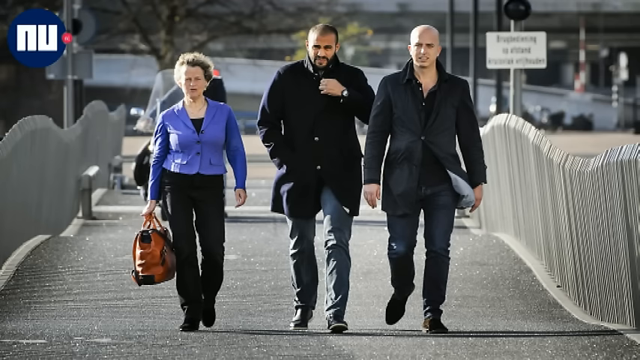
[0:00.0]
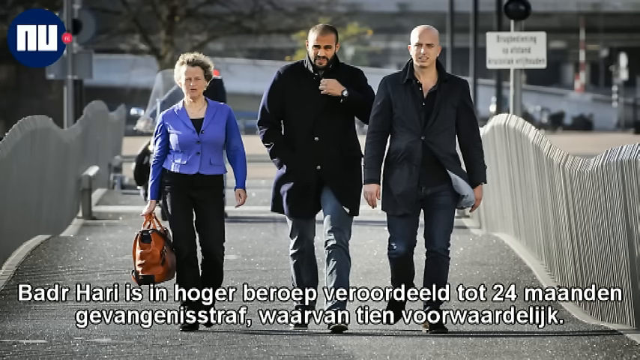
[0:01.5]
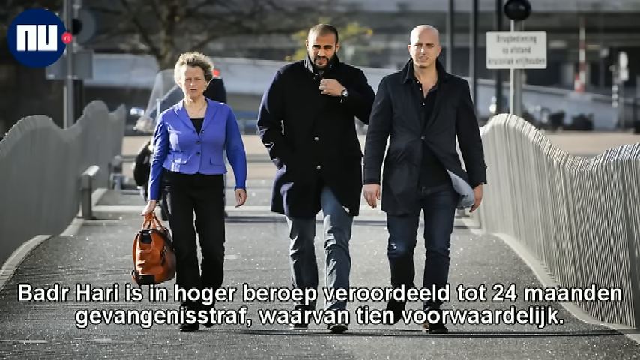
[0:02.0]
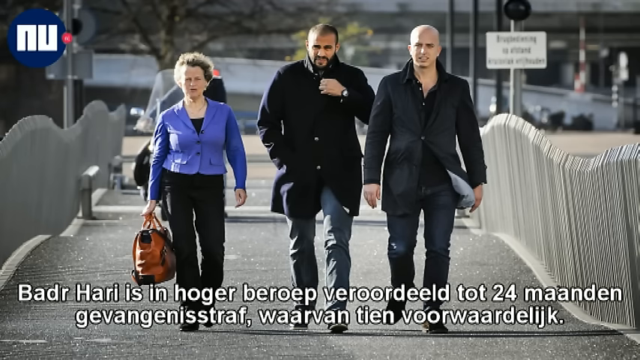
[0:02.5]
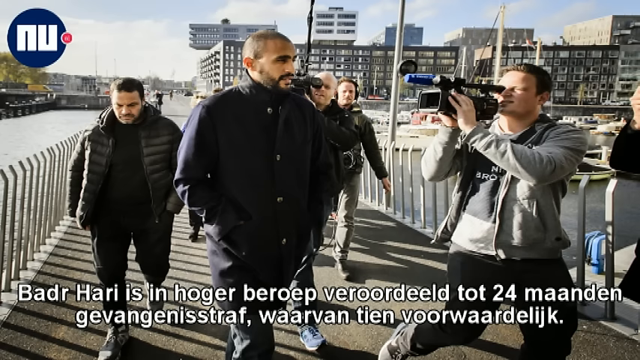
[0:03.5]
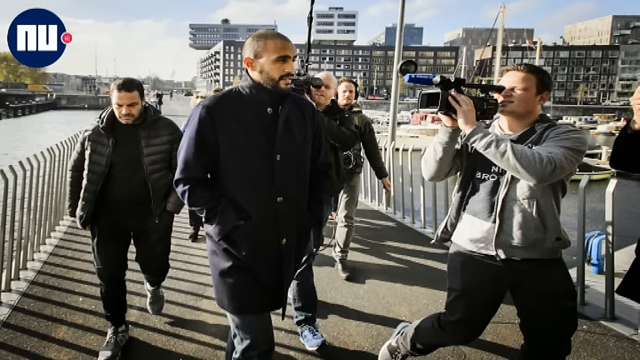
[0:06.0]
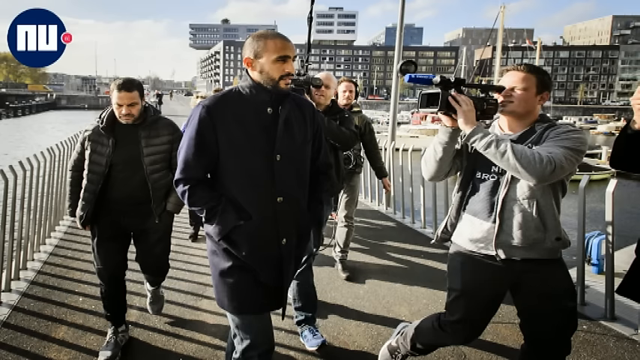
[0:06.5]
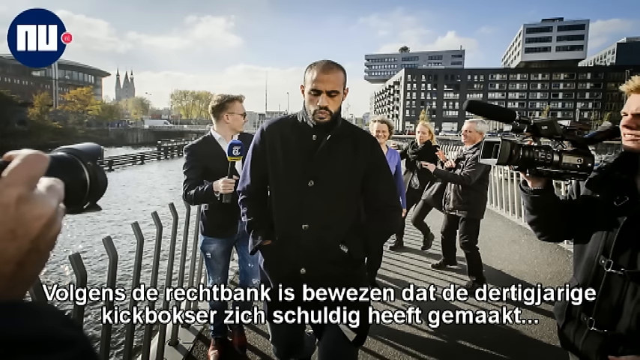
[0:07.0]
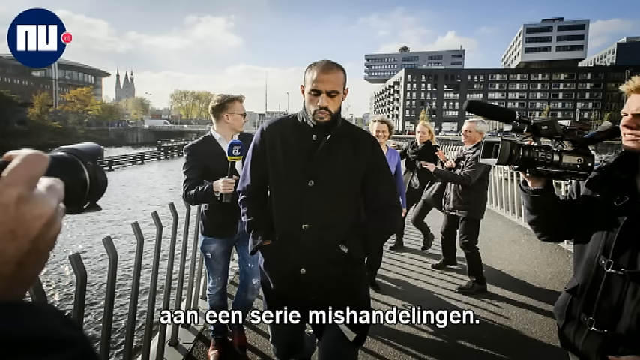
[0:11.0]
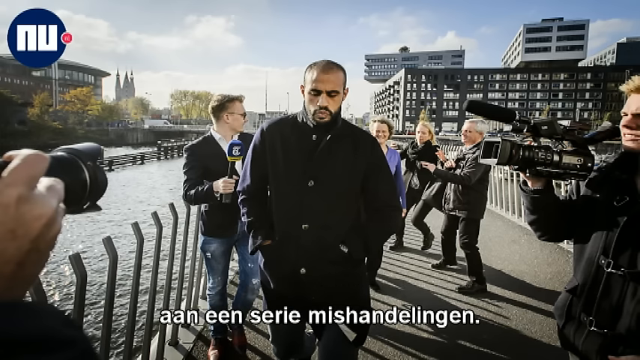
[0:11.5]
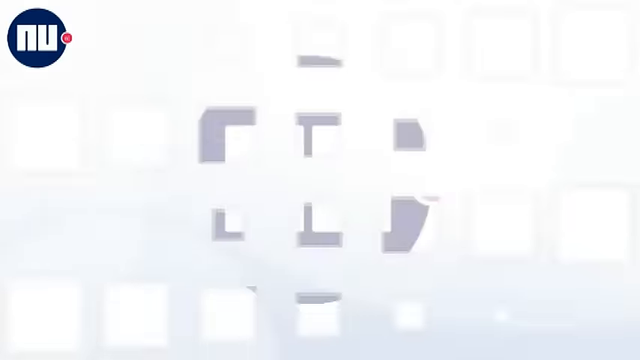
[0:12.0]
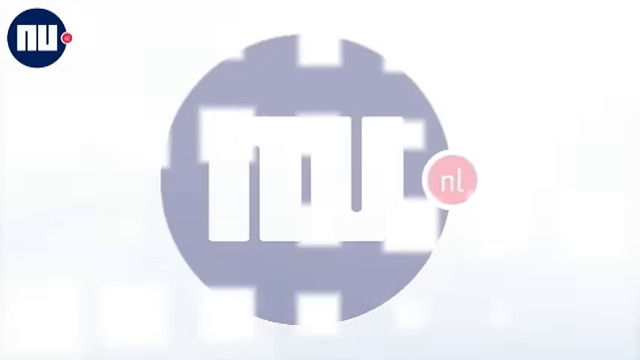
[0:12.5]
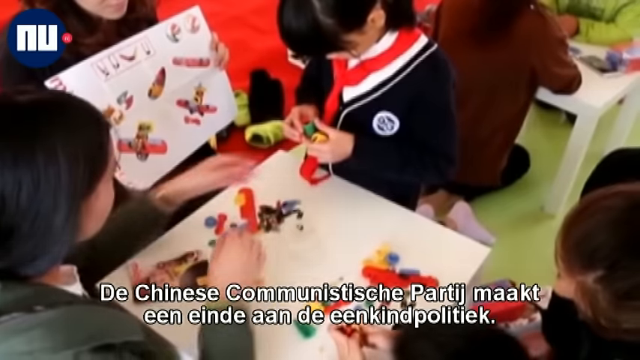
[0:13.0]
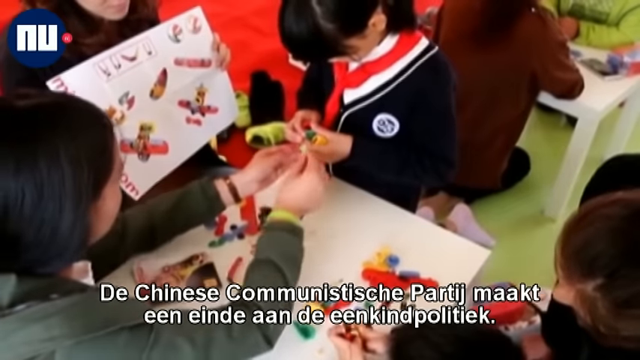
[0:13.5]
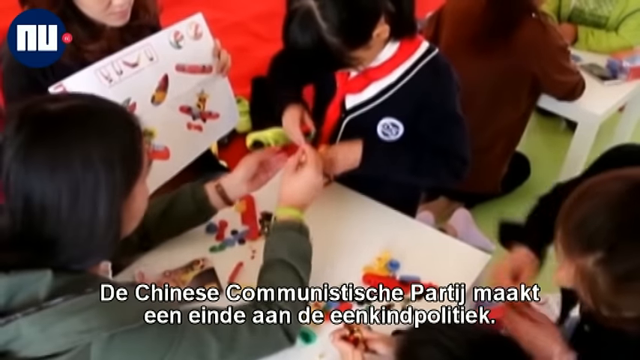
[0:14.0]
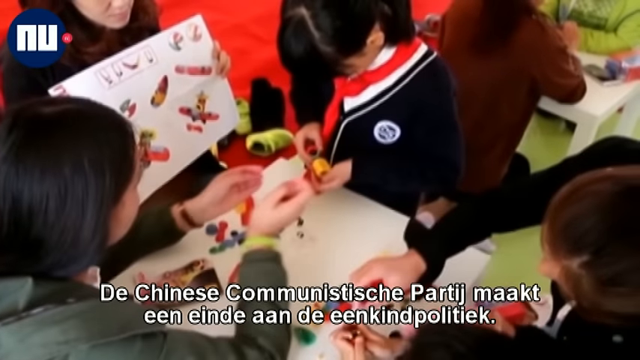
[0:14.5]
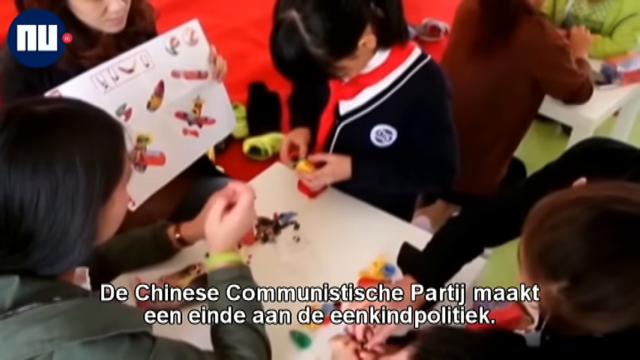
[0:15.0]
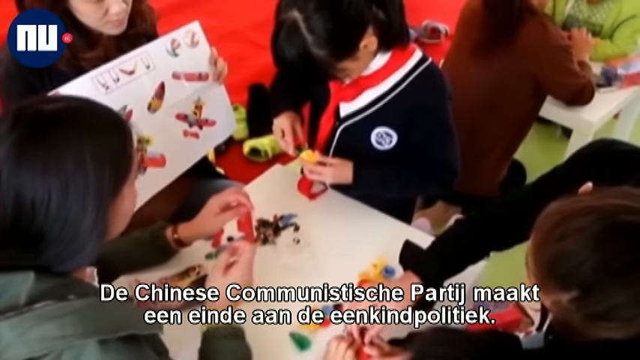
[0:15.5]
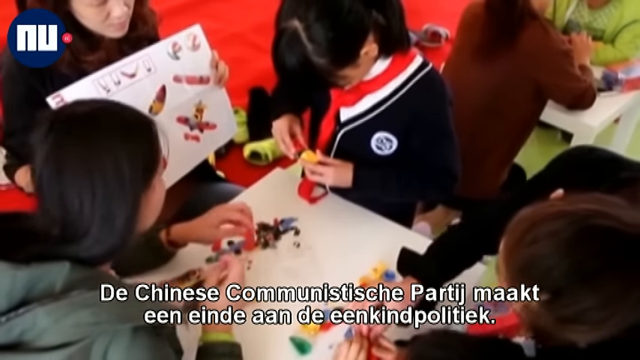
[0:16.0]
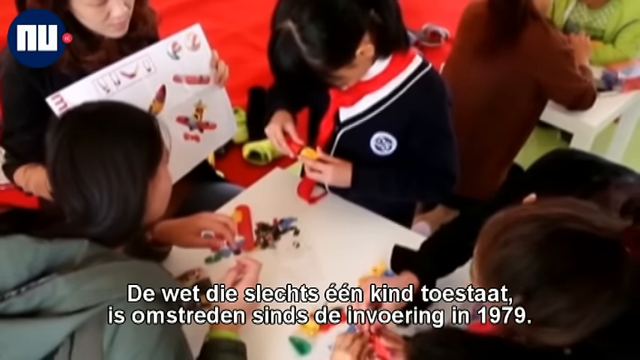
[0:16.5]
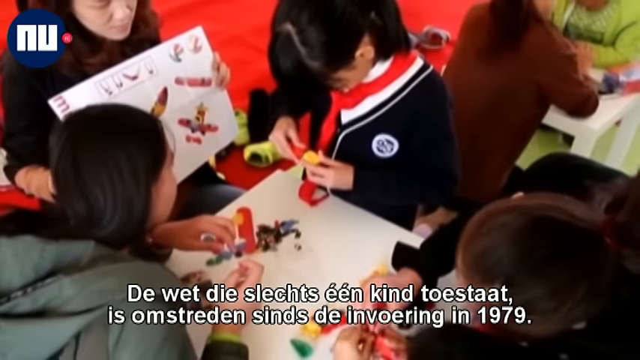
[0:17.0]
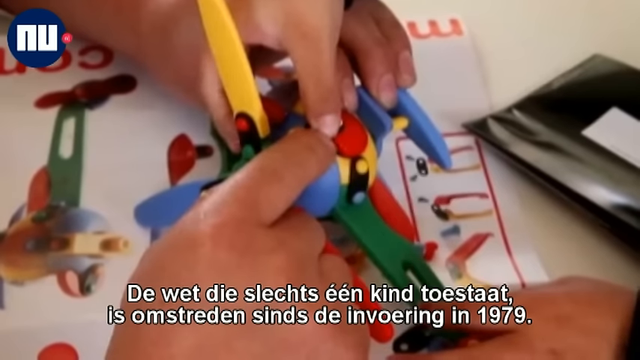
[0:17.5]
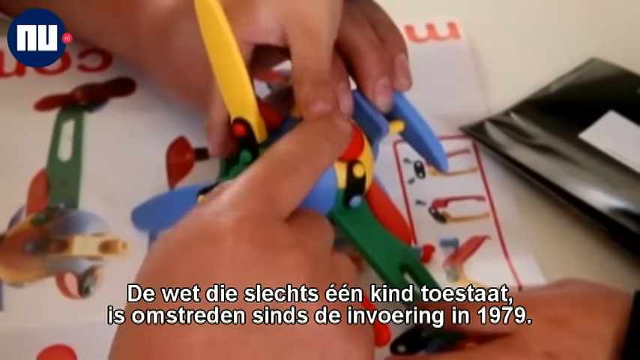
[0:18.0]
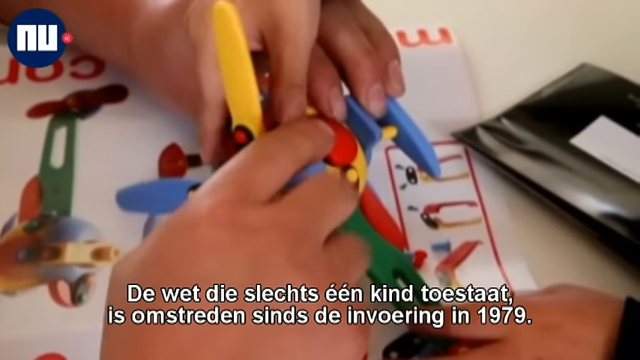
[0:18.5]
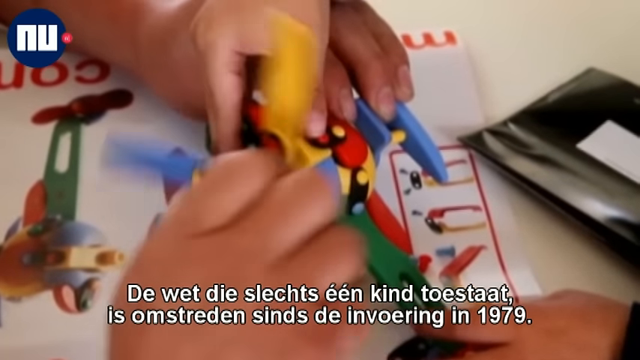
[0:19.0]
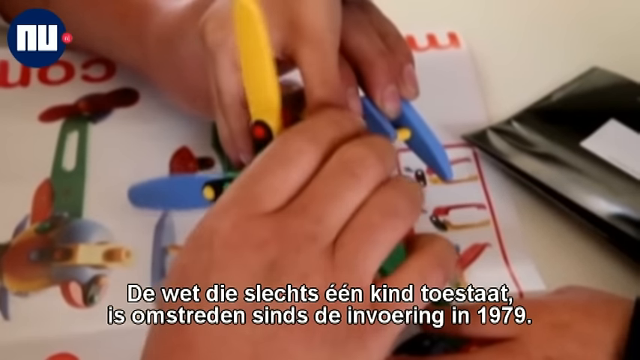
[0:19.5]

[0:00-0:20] This appears to be a news broadcast showing clips of various news items. In the first item, some people cross a stone bridge, walking towards the camera: a lady in a blue blazer holding a brown handbag on the left, a Middle Eastern-looking gentleman standing in the middle, and a white gentleman standing on the right. The caption at the bottom is in a language other than English, apparently German, and the only recognizable word is kickboxer, which seems to relate to the gentleman in the middle. The view then changes to an interview with him alone on the bridge, with a number of news people and cameramen talking to him. The video then cuts to something completely different: some Chinese adults and Chinese children all working at a table doing some kind of arts and crafts. The only recognizable words in the German caption are Chinese Communist Party, so this item has something to do with the Communist Party in China.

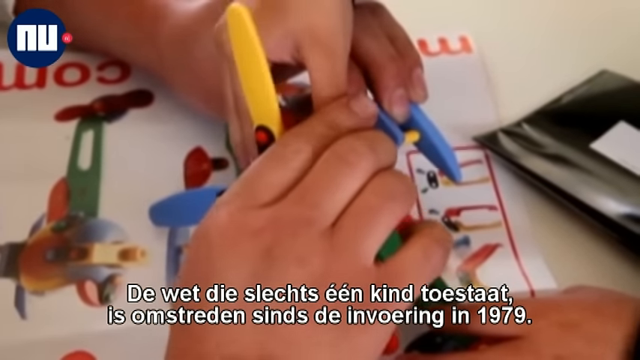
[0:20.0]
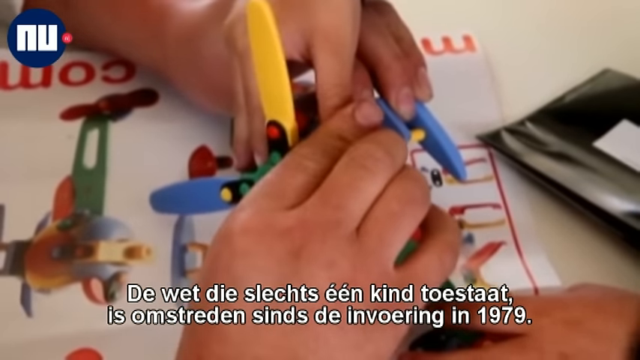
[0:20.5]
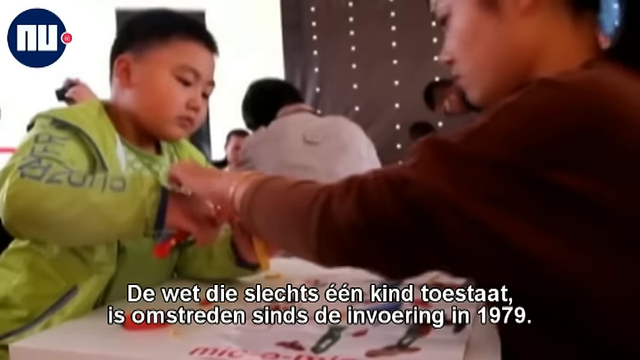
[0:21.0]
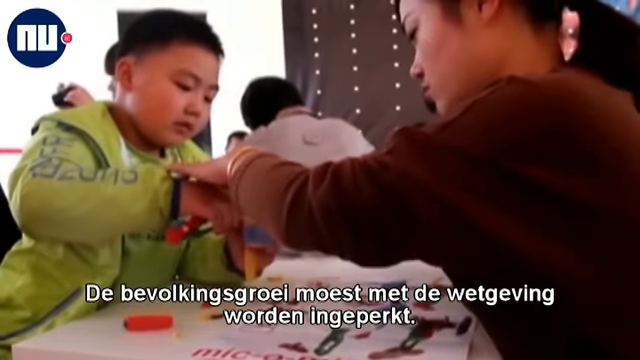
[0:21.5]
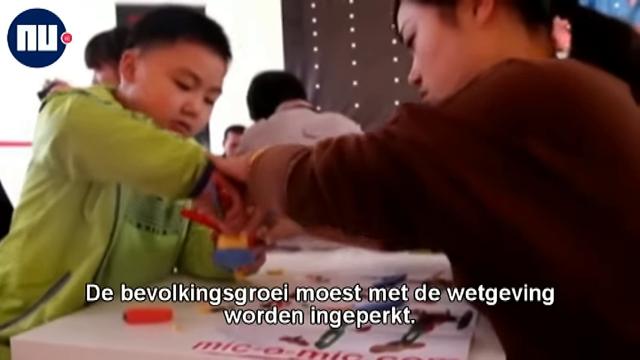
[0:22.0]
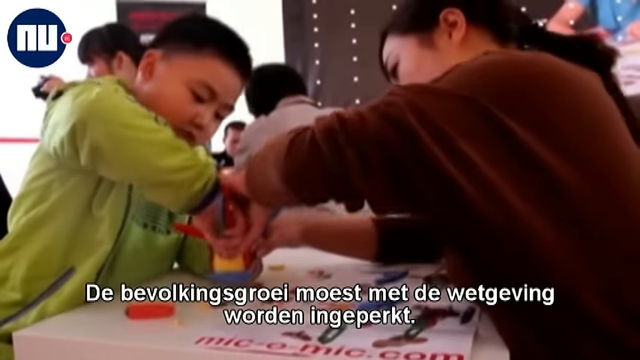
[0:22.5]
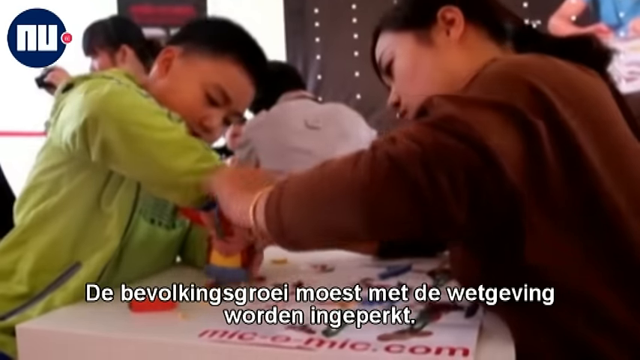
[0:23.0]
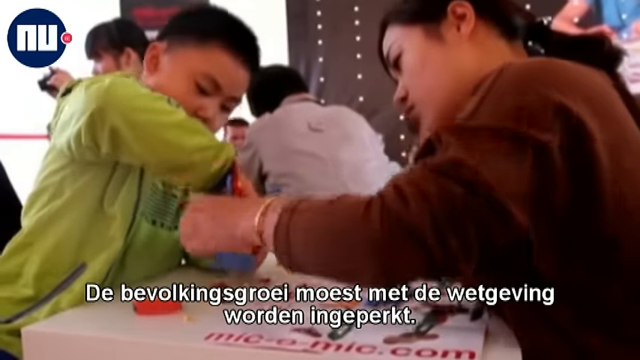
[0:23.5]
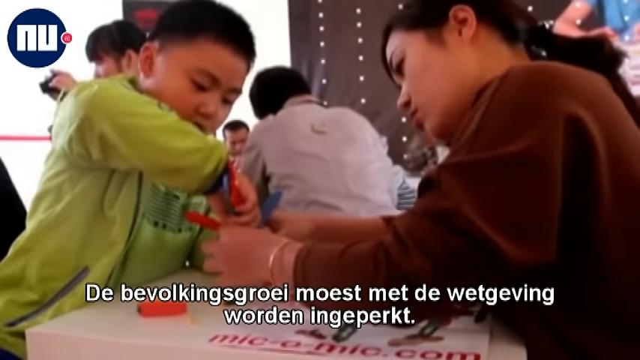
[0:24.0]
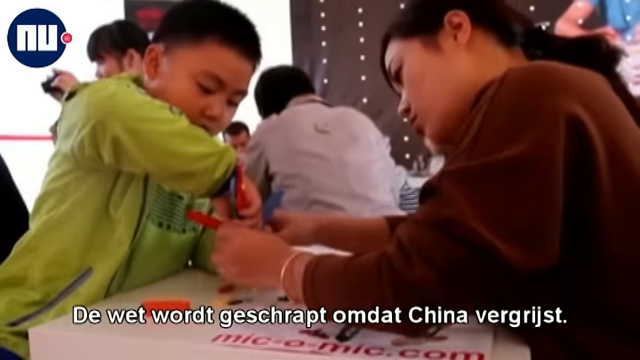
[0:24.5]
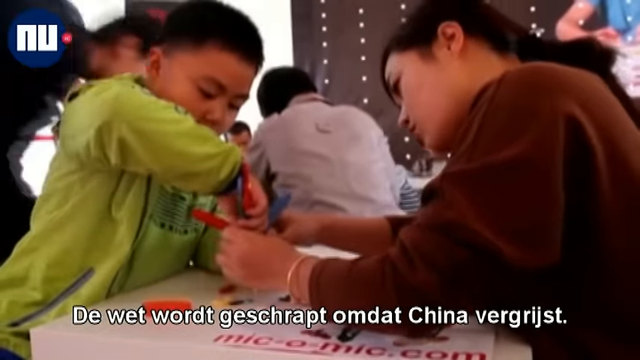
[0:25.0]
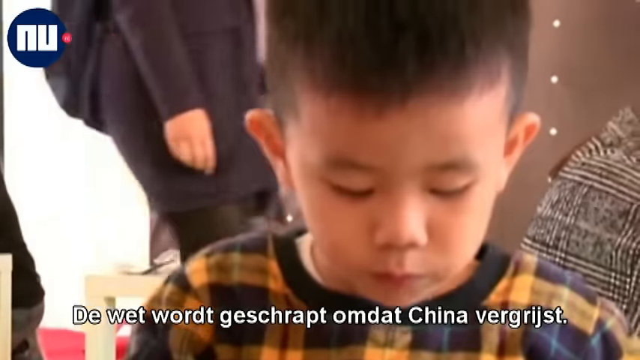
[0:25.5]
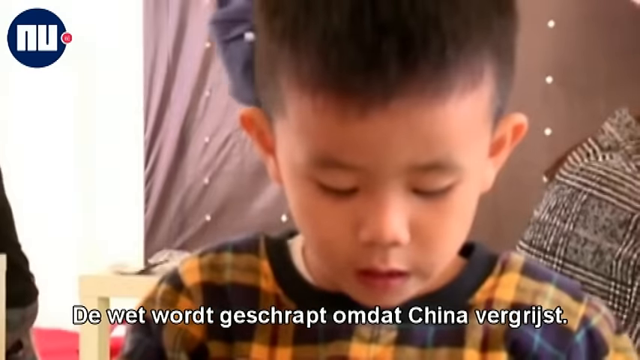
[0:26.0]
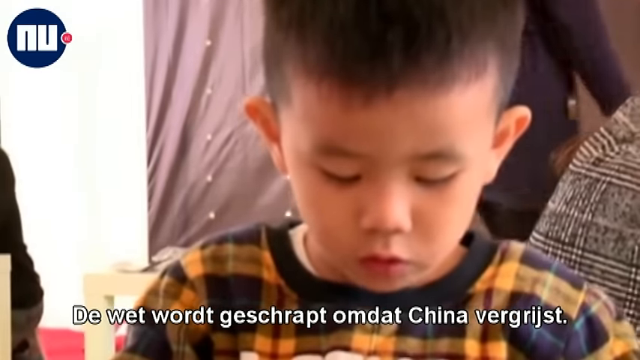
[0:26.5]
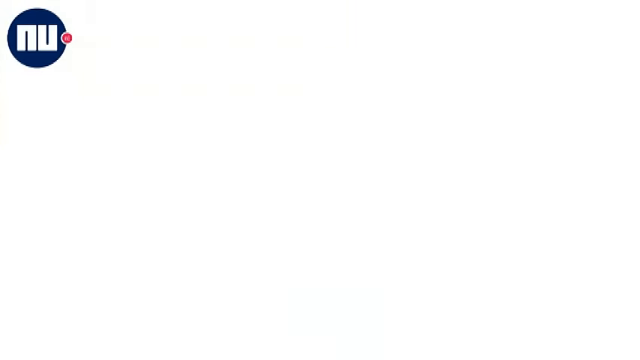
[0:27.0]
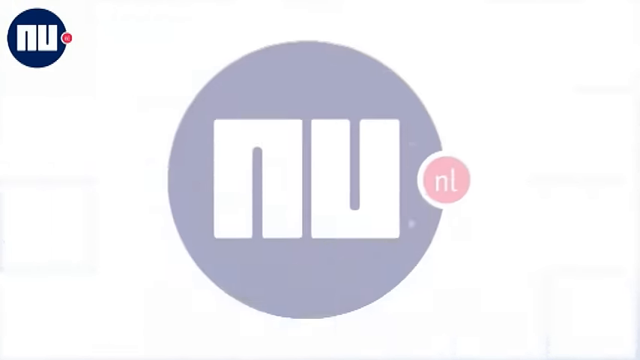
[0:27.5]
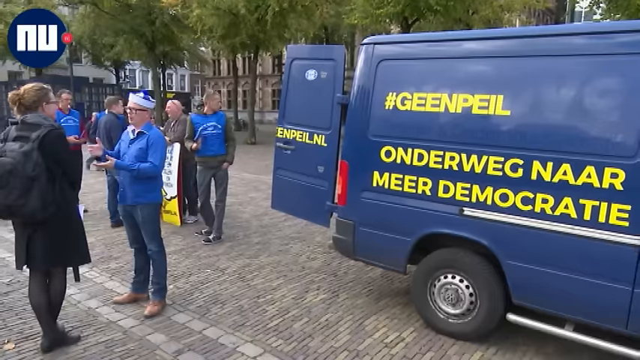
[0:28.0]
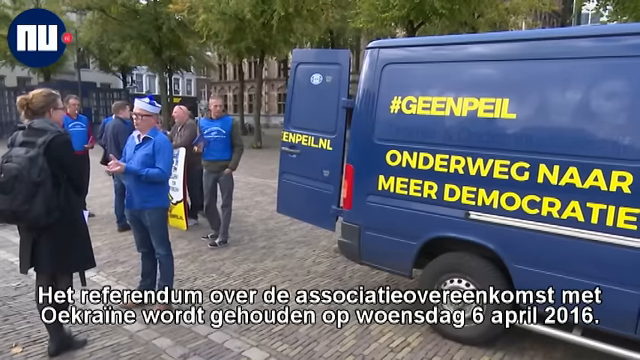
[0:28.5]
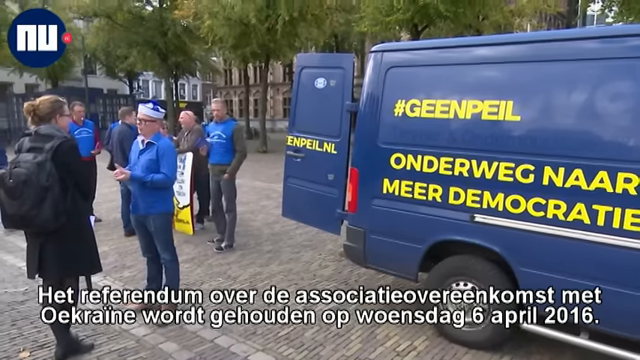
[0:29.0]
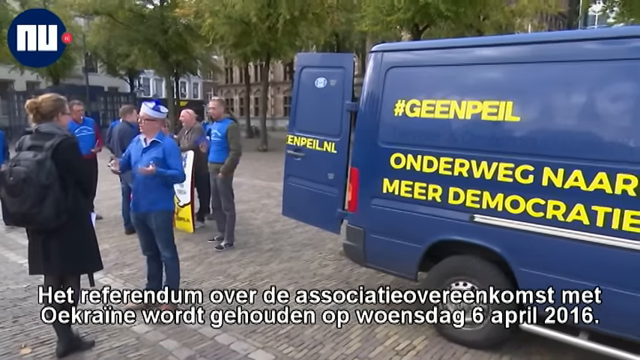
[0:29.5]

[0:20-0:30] The news clip continues with Chinese people making crafts. A close-up shows an adult Chinese lady in a burgundy sweater sitting to the right of the table, and on the left of the table a Chinese boy in a lime green shirt building some kind of craft in his hand. The lady also has her hands on the craft, trying to guide the boy's hands to make it properly. The video then changes to a blue van with some green writing on its side, with the camera facing the right of the van. Some people stand behind the van having a discussion on a stone driveway, with trees in the background. There is a caption in German at the bottom.